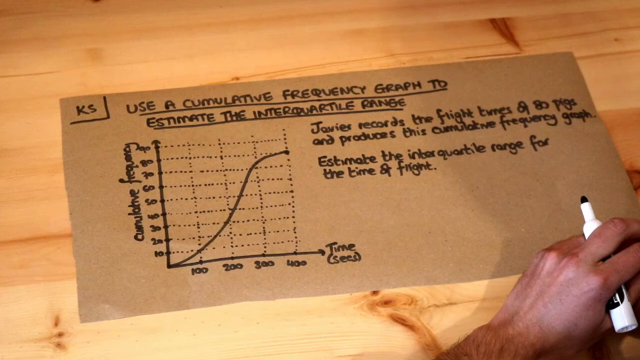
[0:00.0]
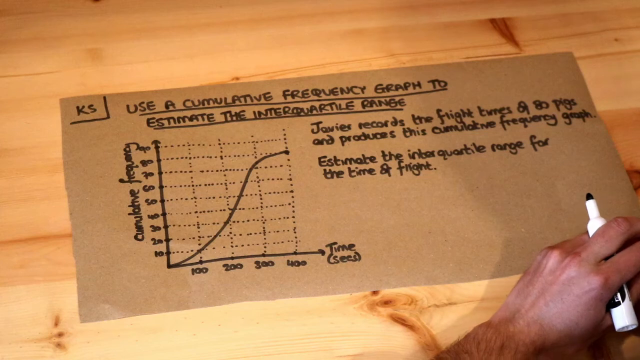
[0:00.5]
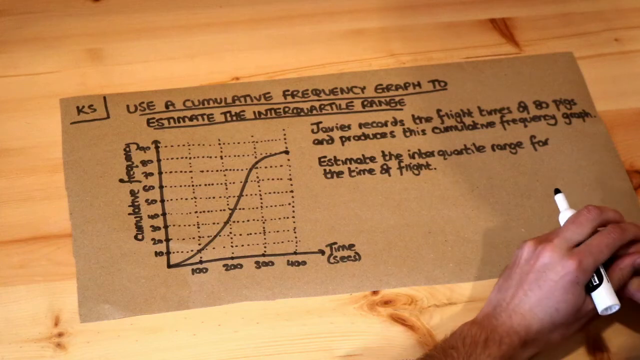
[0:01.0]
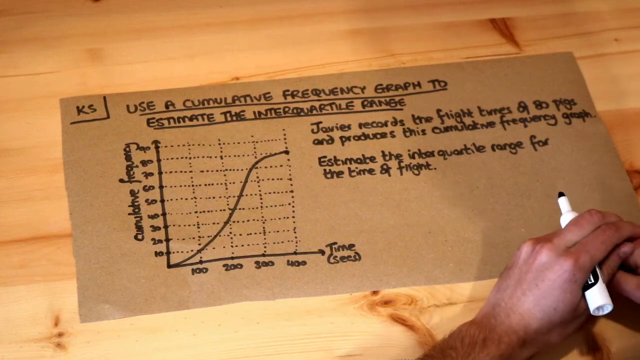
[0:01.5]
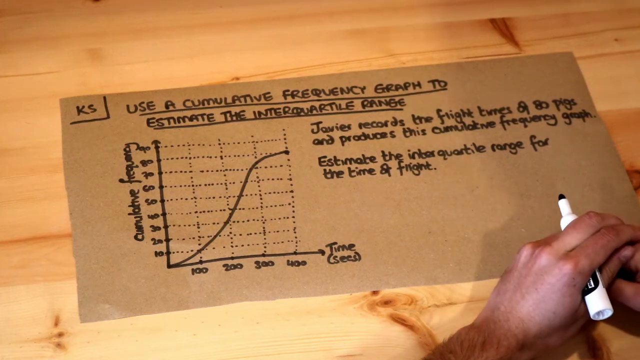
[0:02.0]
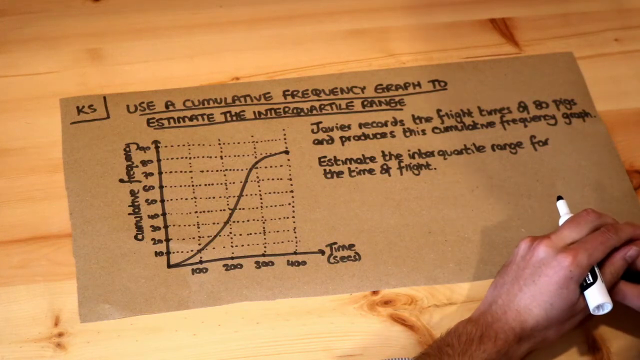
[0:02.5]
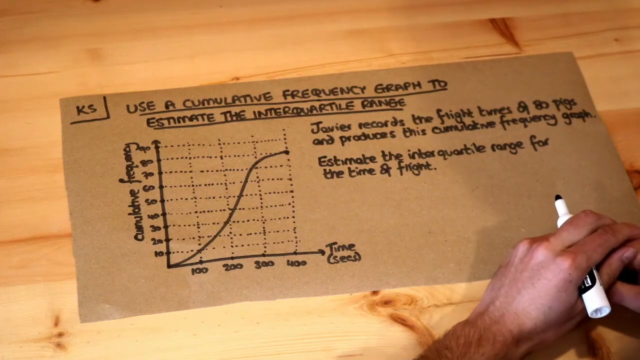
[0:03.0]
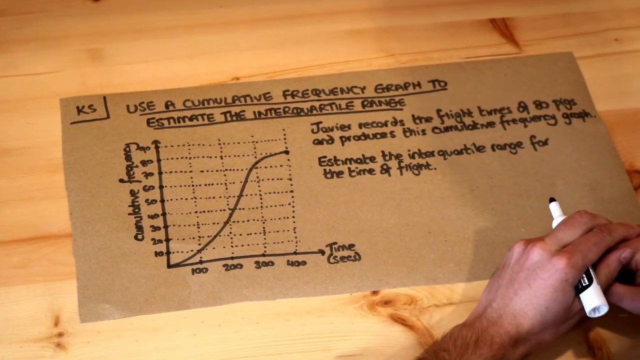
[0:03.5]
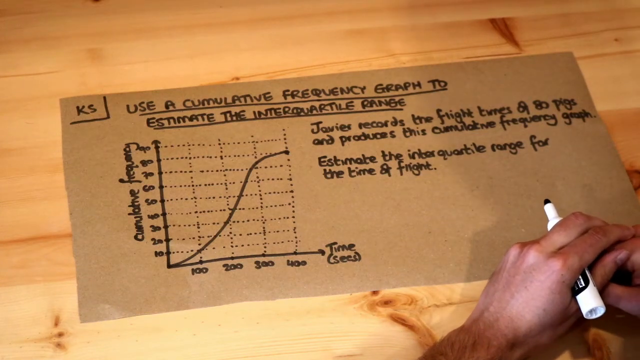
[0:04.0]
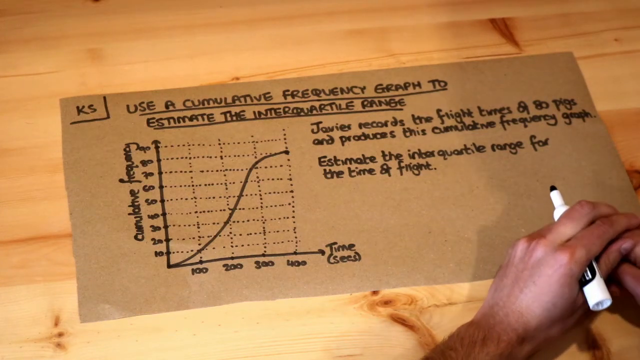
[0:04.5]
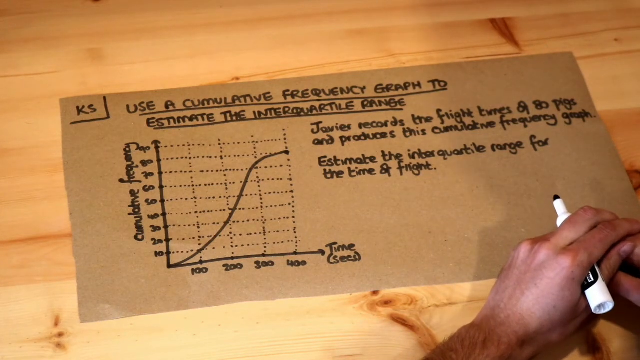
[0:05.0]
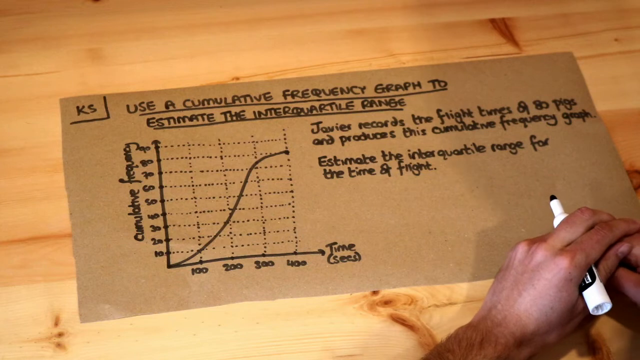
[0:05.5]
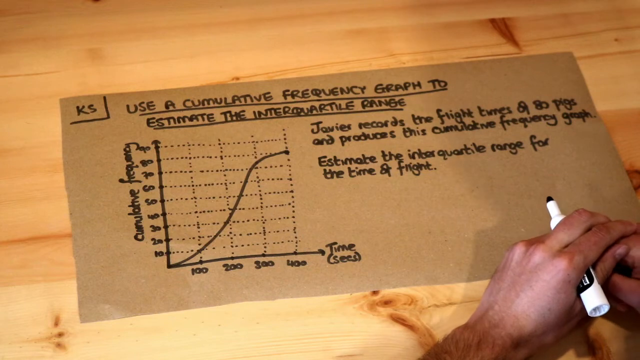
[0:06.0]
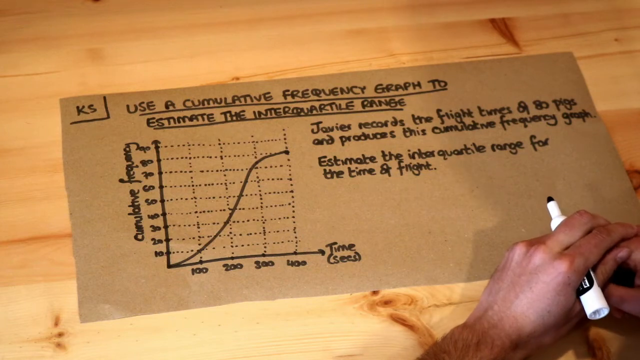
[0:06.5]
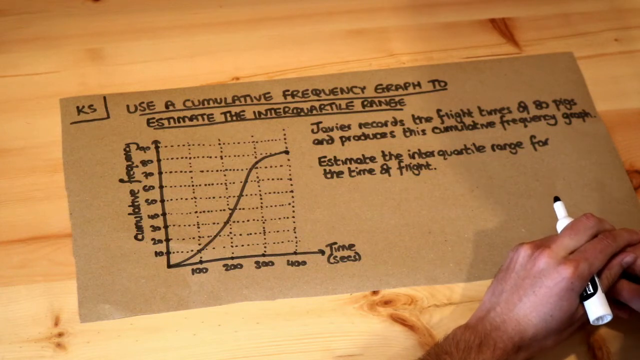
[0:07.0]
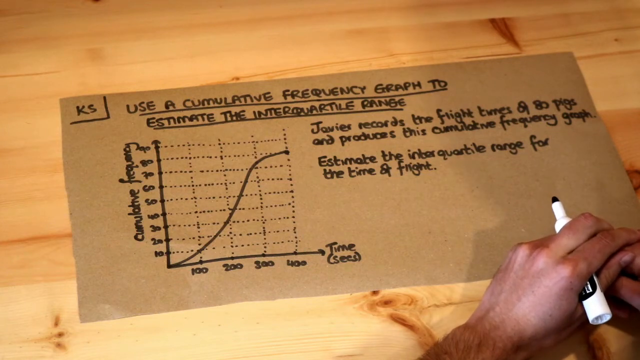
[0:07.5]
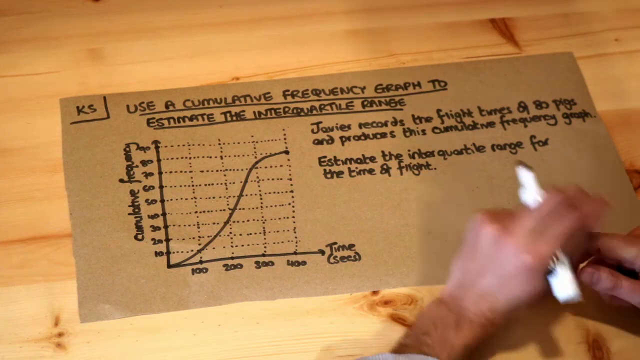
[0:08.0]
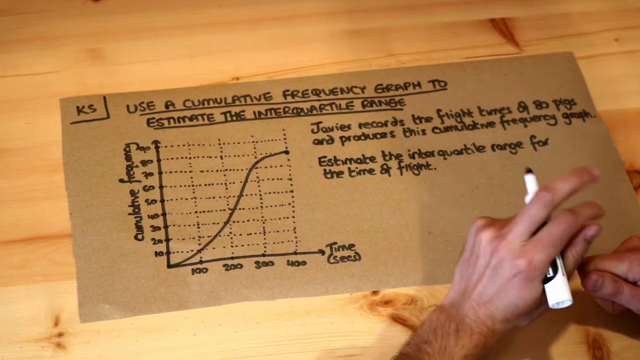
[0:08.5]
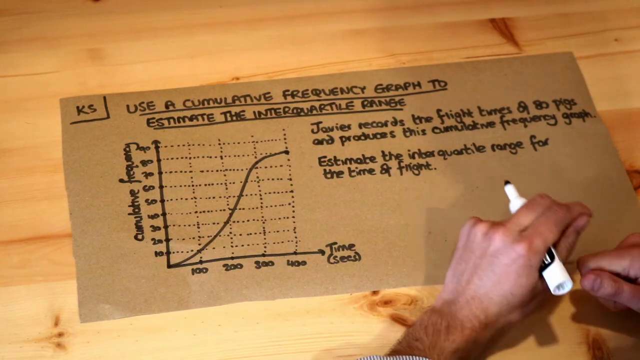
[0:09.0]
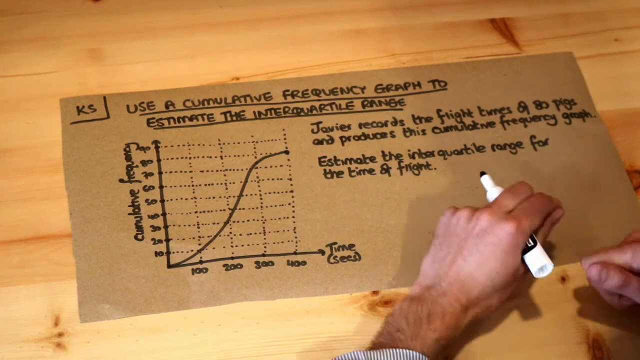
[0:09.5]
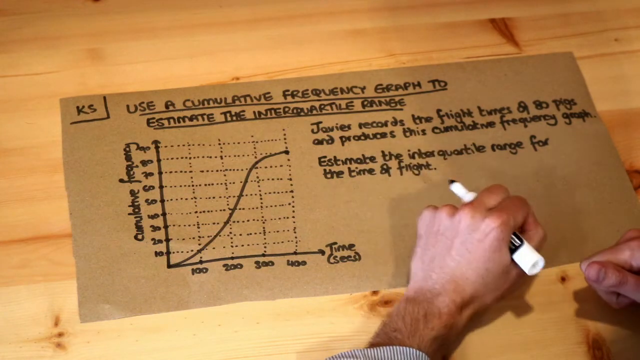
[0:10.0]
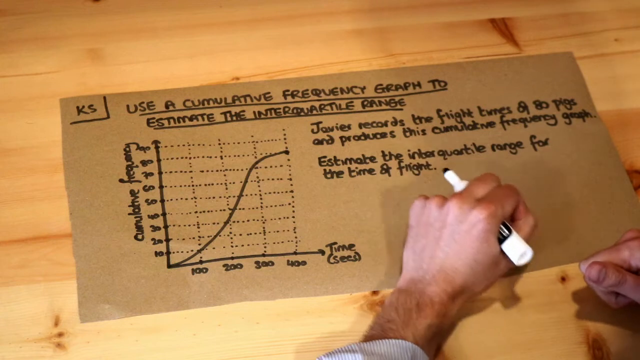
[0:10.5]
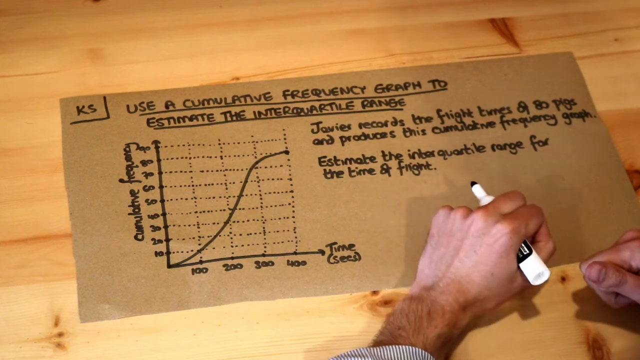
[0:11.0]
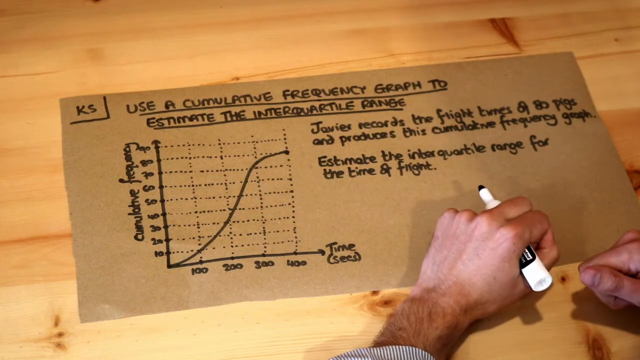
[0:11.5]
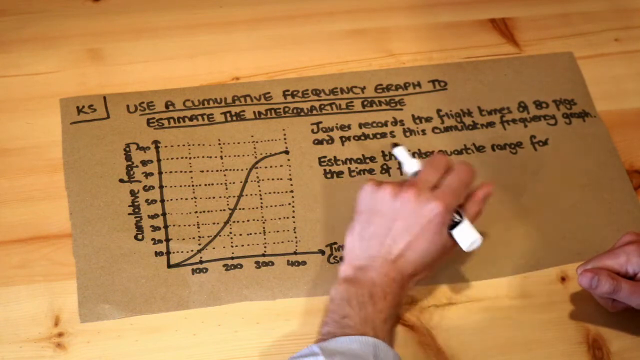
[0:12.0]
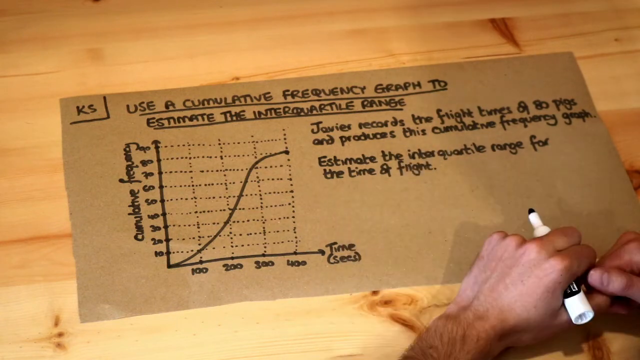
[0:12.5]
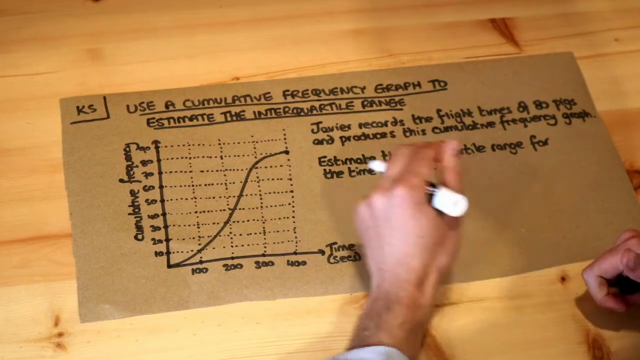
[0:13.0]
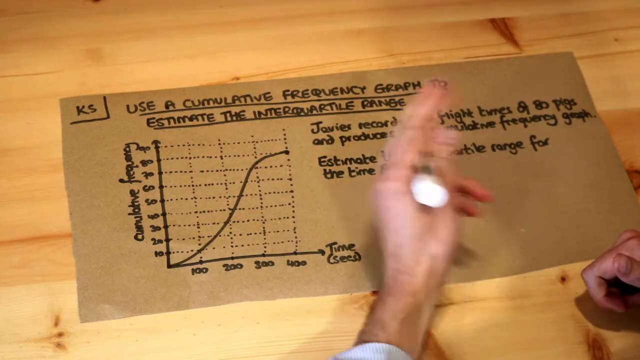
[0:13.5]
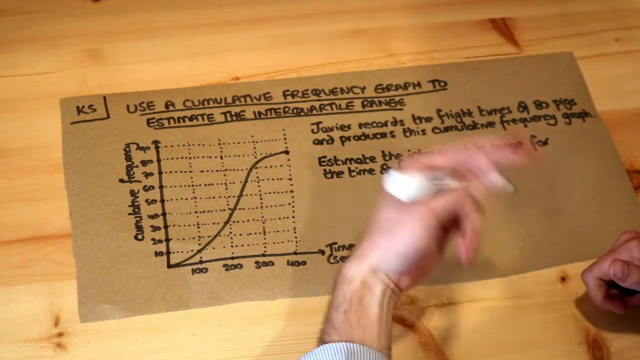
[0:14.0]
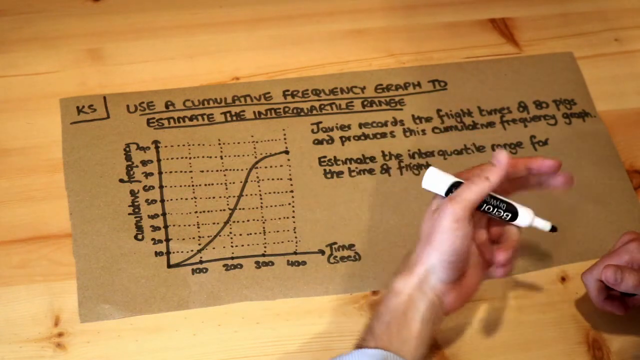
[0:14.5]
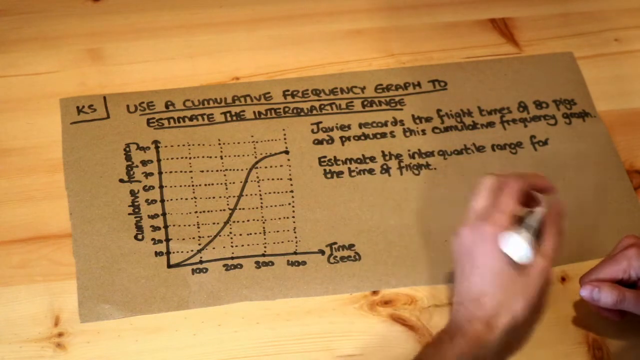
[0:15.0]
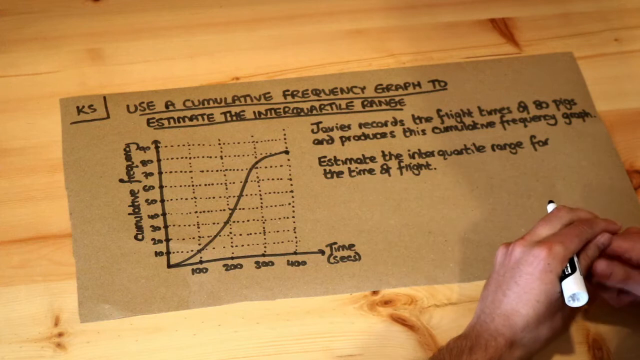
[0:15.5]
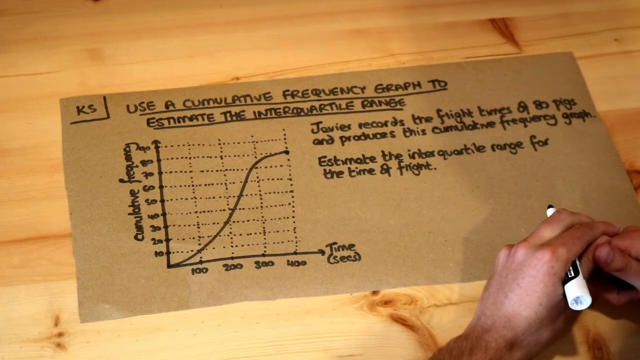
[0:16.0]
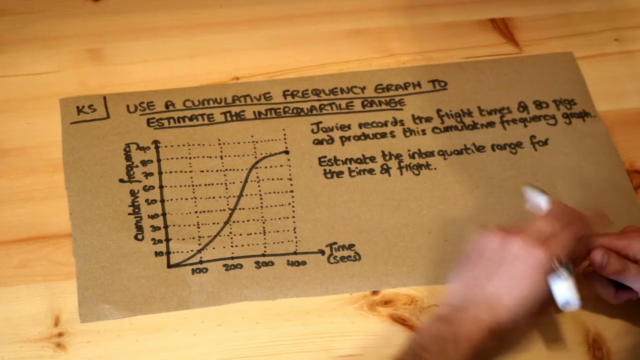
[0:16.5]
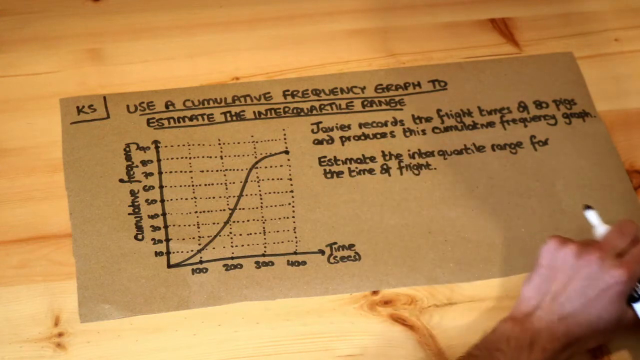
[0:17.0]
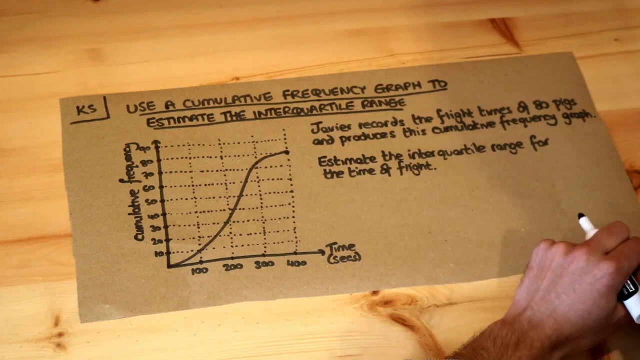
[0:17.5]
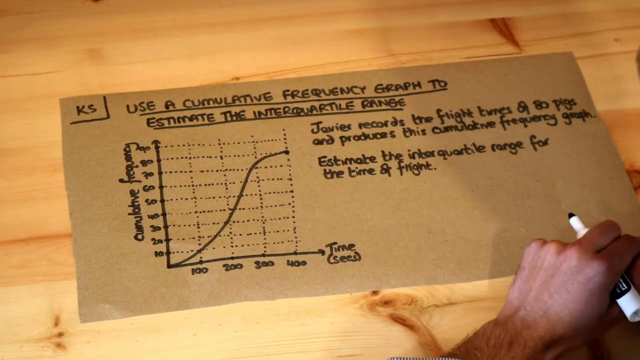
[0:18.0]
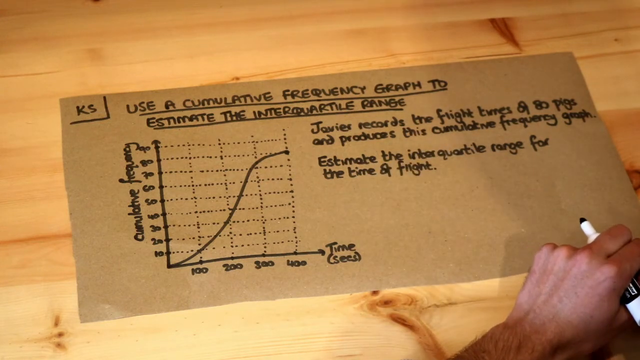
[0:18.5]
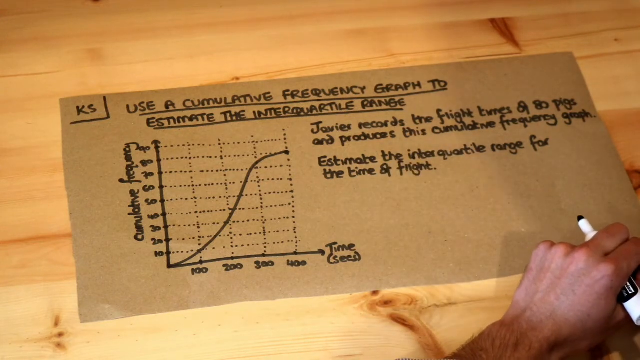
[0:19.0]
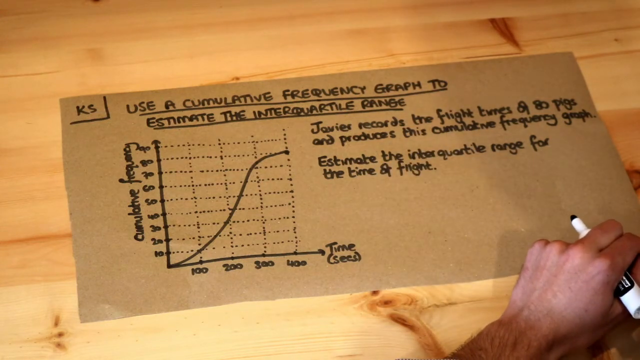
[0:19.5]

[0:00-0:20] Handwritten information is on a piece of cardboard, and a person's hands are visible. The person is writing very neatly about a graph, which appears to be on the left-hand side. It is a line graph with a curved line that goes from the bottom up as it moves to the right. The person holds the marker in their left hand and is sort of moving their hand toward the words they have written. Both hands are in view. Text begins "use a cumulative frequency graph to estimate the" followed by a hard-to-read word and "range", and "KS" is in the upper left-hand corner. The graph shows time along the bottom and another measurement going vertically on the left-hand side. There is plenty of space underneath where the writing stops, so it looks like the person may write more.